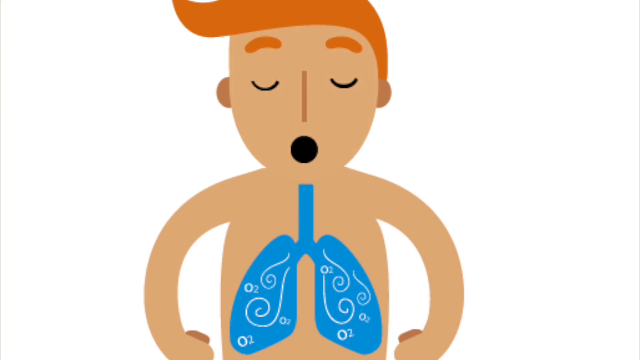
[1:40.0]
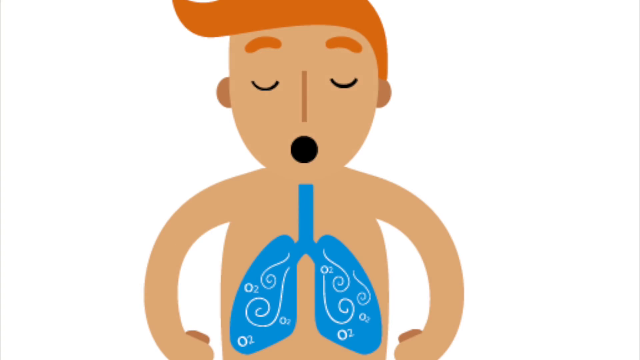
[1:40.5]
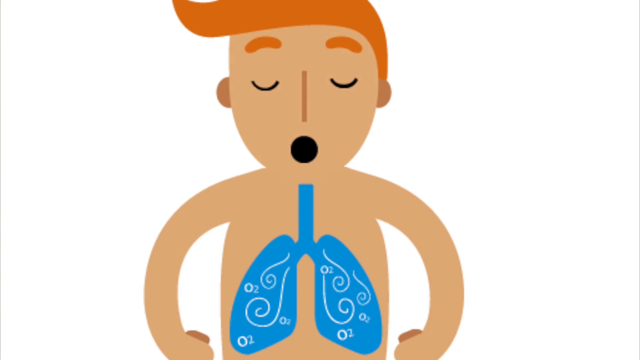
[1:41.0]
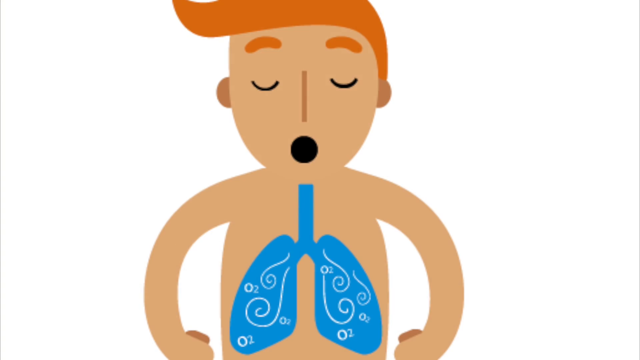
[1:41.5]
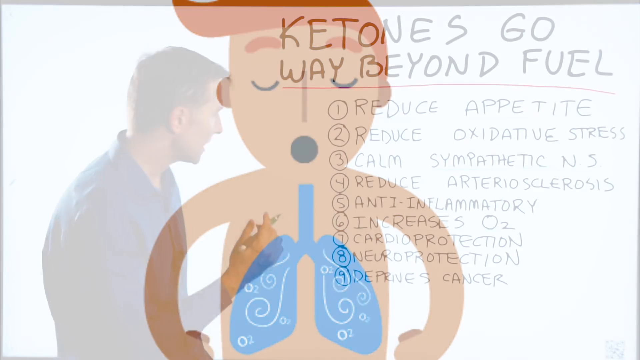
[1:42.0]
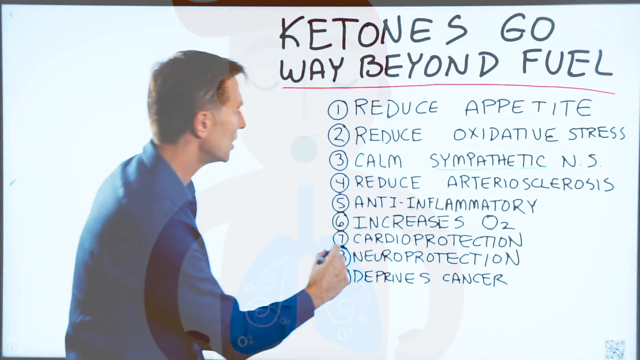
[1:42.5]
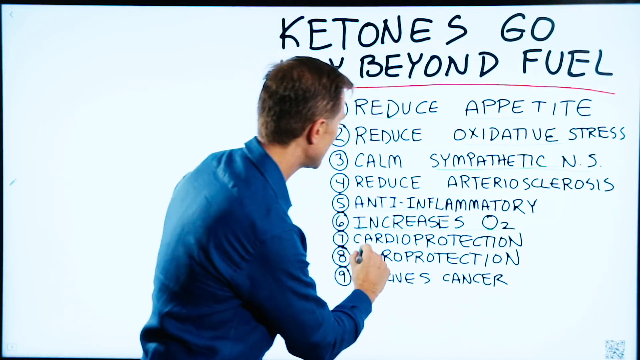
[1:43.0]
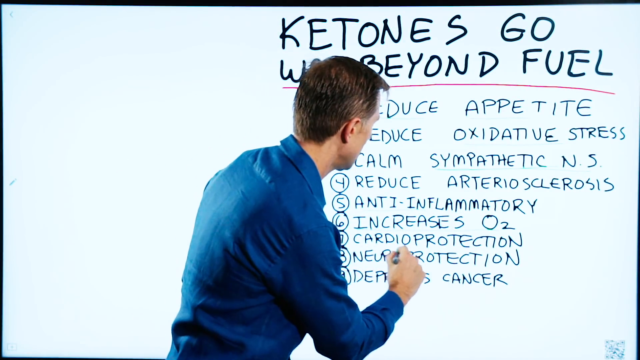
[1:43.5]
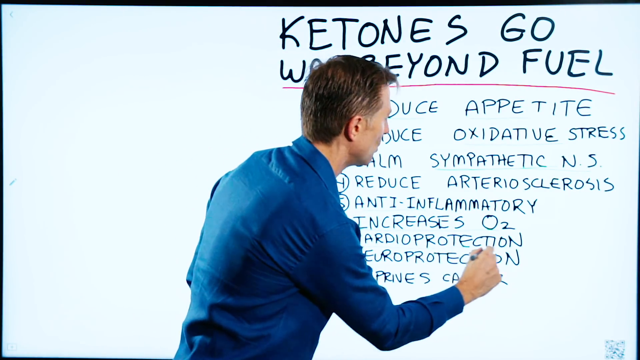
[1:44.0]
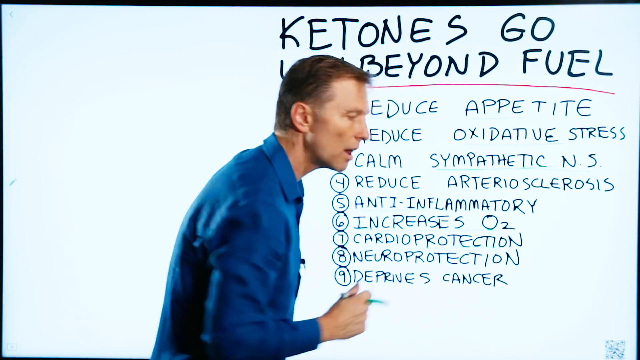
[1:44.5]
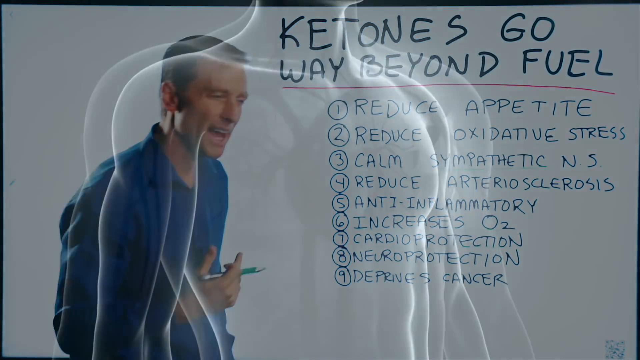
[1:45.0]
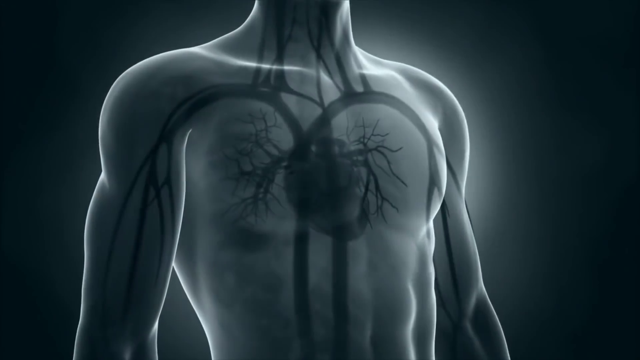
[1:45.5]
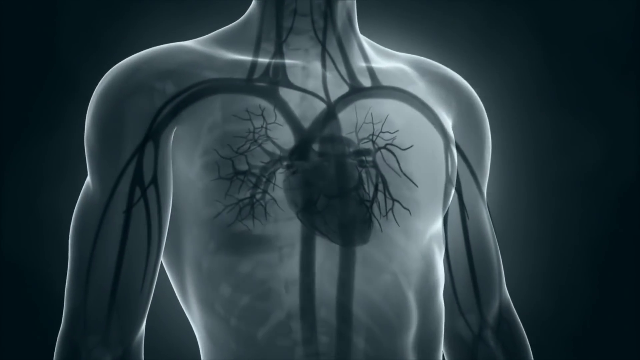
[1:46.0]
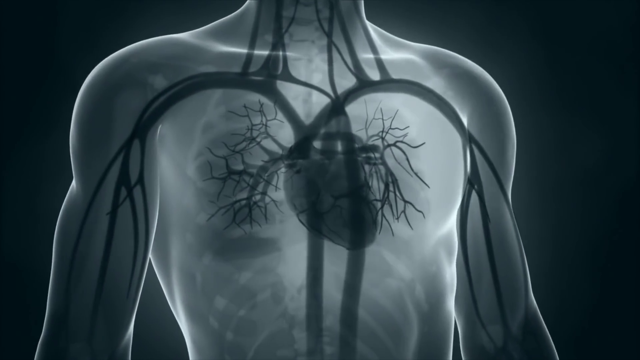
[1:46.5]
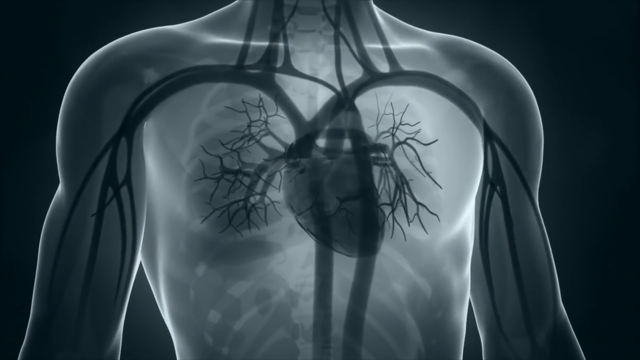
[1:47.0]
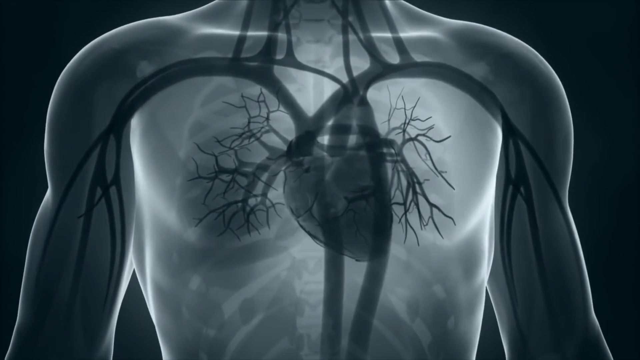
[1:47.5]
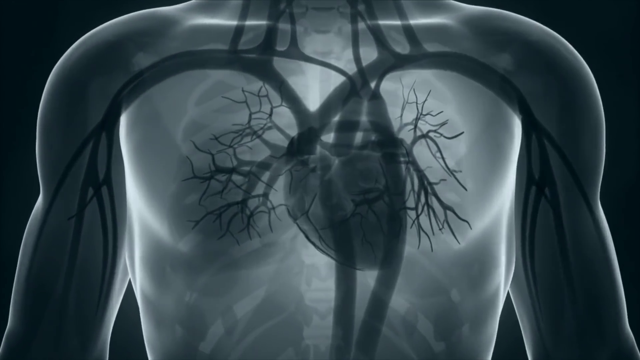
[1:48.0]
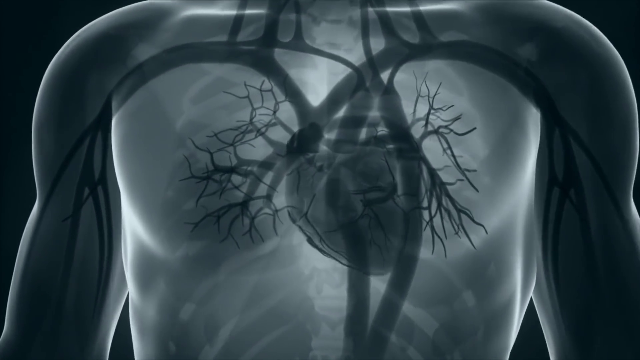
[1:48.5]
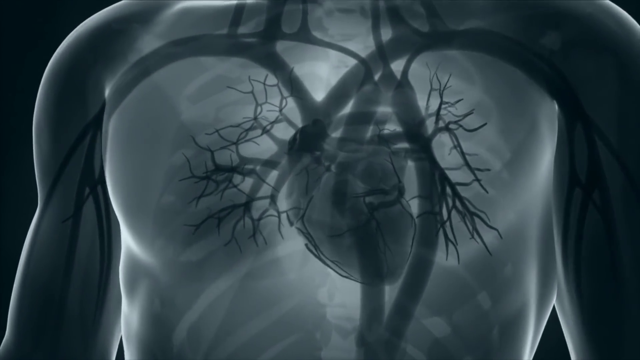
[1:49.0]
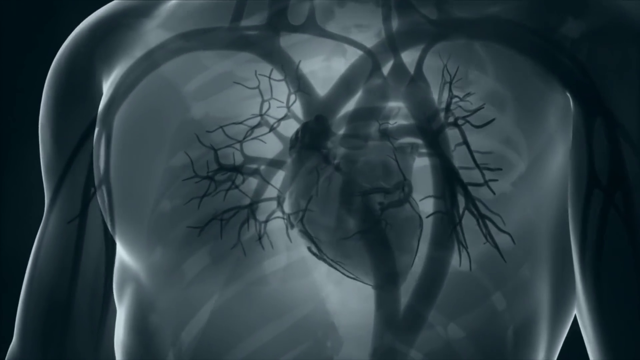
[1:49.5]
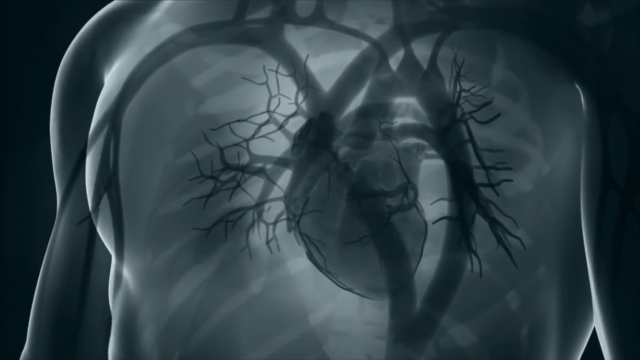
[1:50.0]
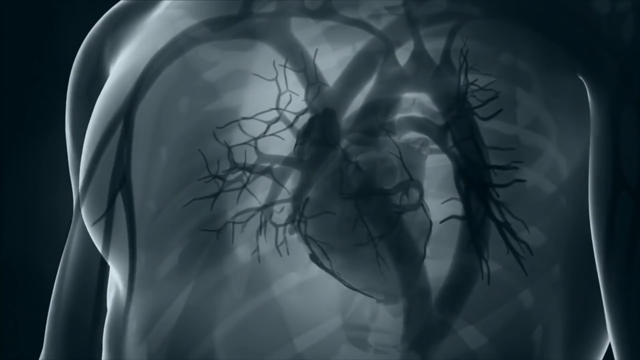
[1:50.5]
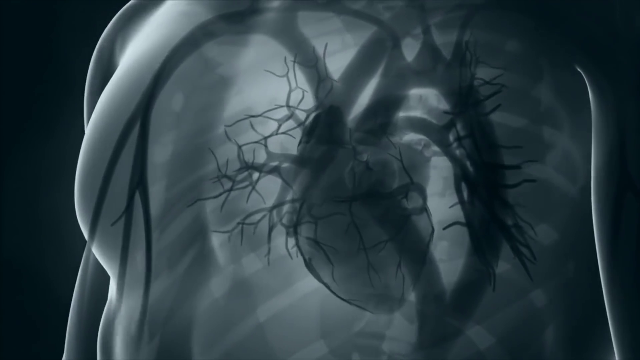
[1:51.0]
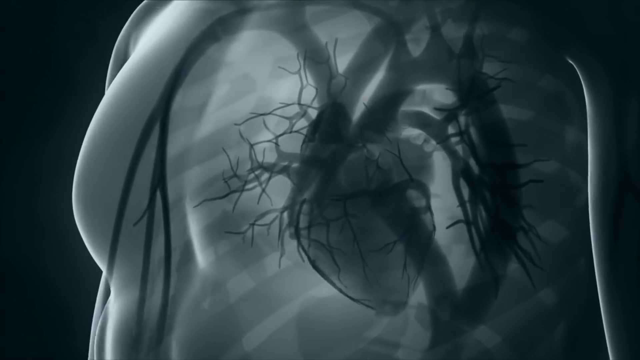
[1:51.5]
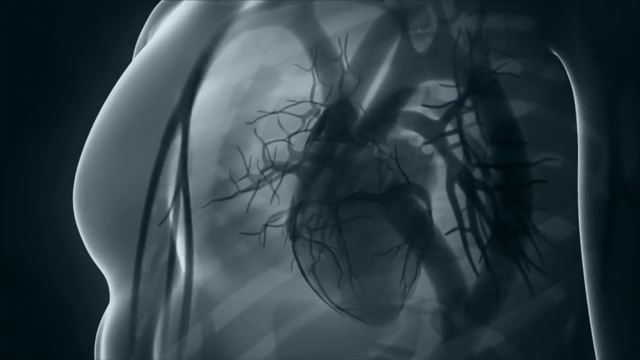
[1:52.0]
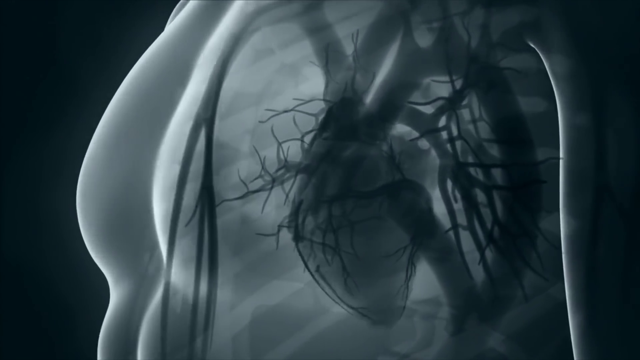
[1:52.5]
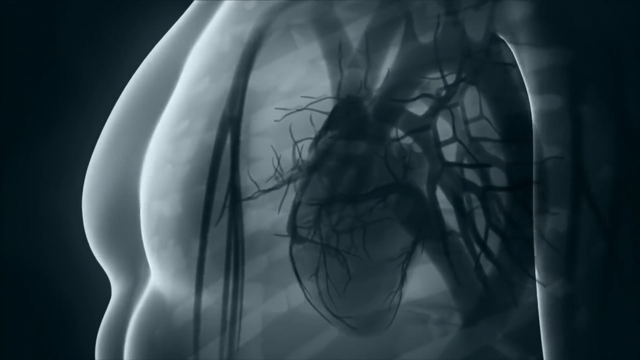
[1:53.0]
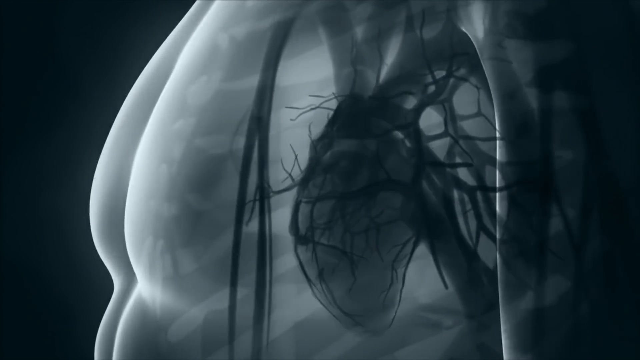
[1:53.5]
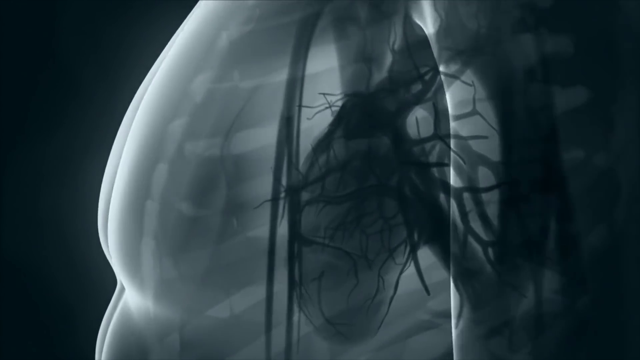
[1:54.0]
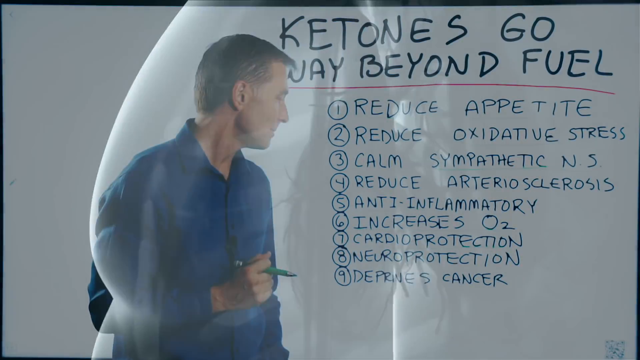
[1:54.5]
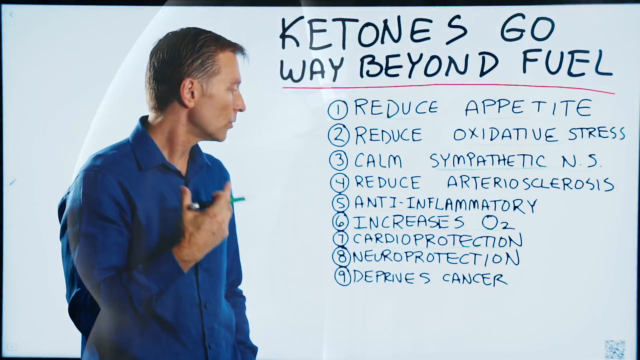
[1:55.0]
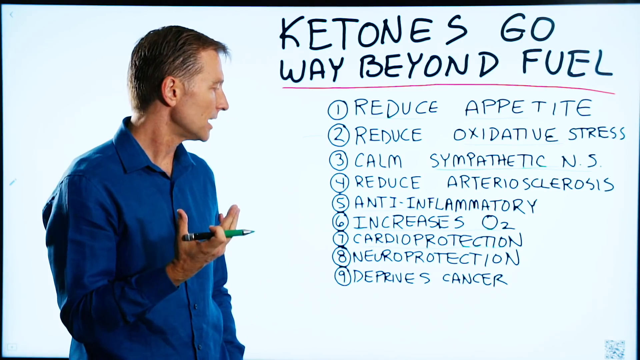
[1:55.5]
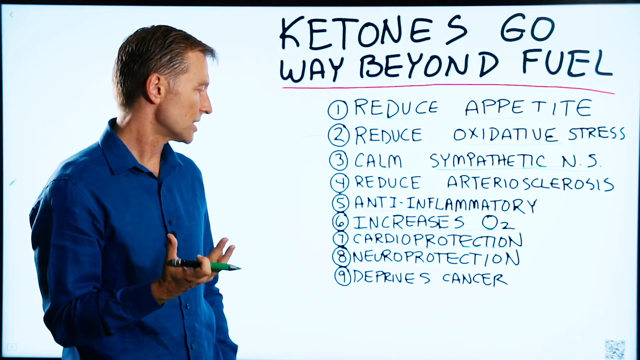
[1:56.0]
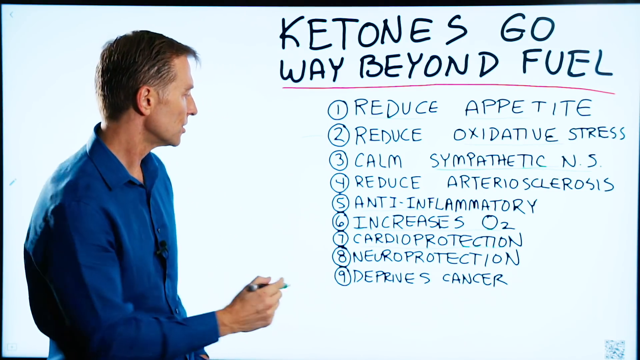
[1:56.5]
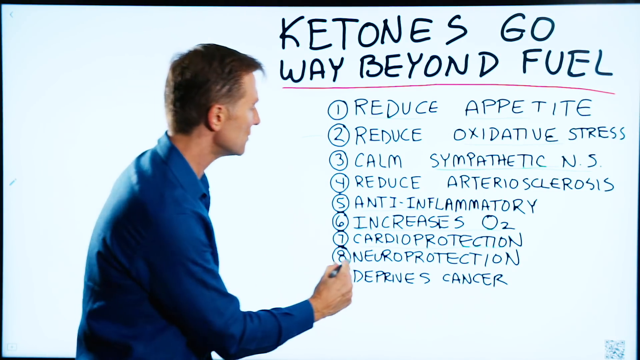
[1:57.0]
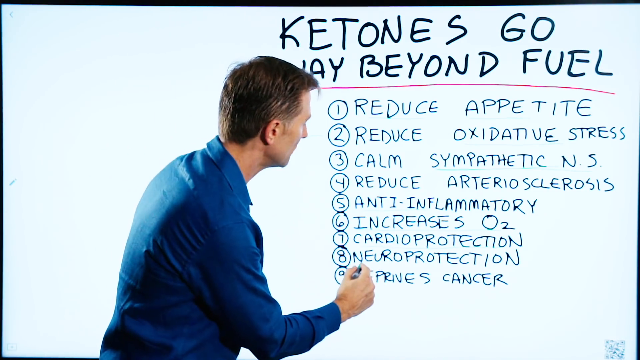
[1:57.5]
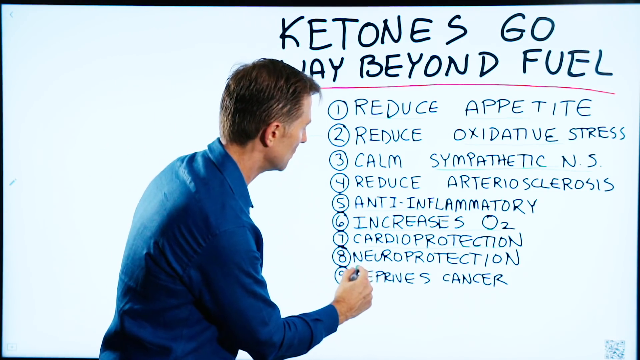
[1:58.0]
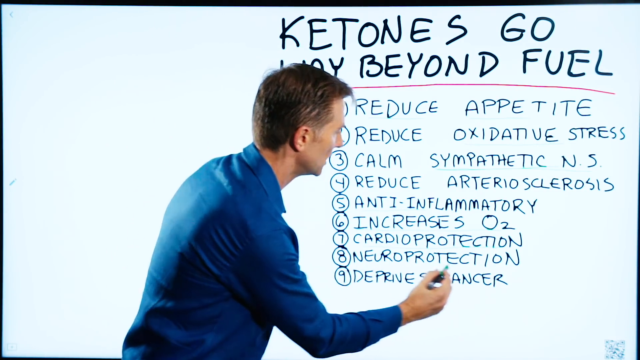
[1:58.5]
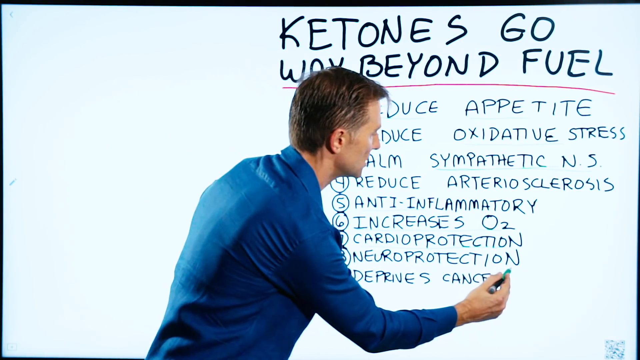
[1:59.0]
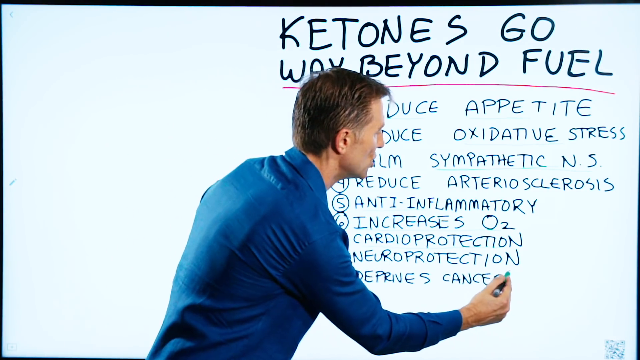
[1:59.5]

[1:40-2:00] The man with orange hair who looks like he is breathing appears, with his lungs or the pathways for air visible. The video goes back to the presenter and almost immediately cuts to a more detailed illustration of a grown man showing where his heart is, apparently with arteries and veins, as well as his lungs. The illustration is black and white, and his heart is seen beating, seemingly regularly, for a few seconds, apparently illustrating the cardioprotection point. The presenter then moves down to the next point on the list, neuroprotection, and underlines it a couple of times.